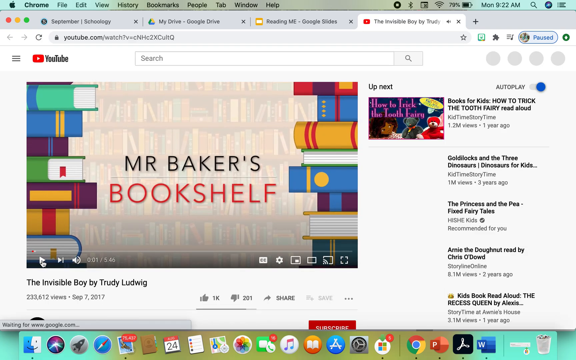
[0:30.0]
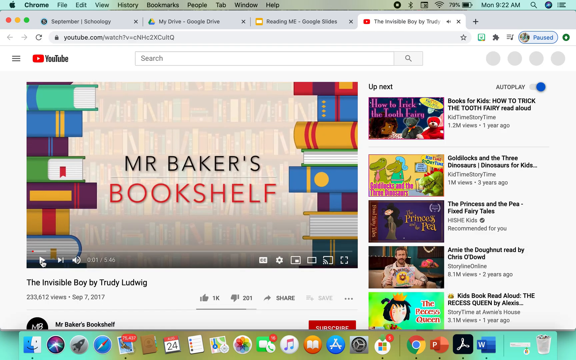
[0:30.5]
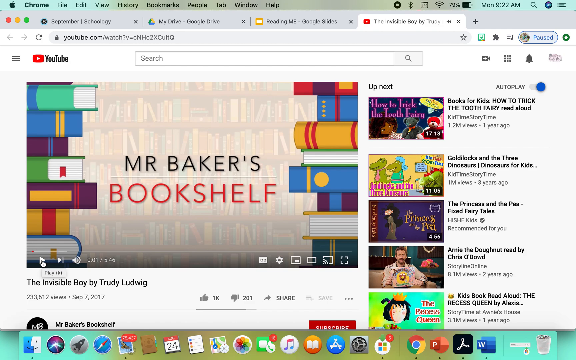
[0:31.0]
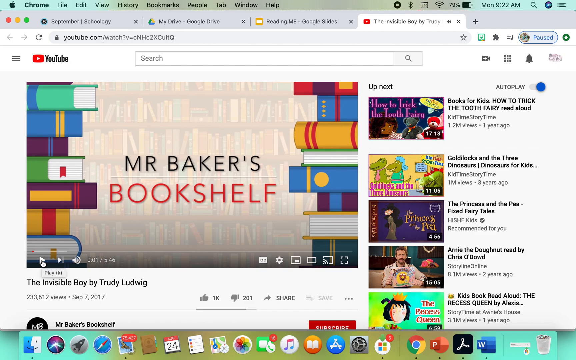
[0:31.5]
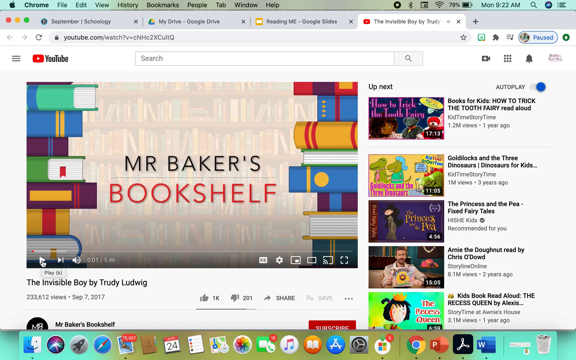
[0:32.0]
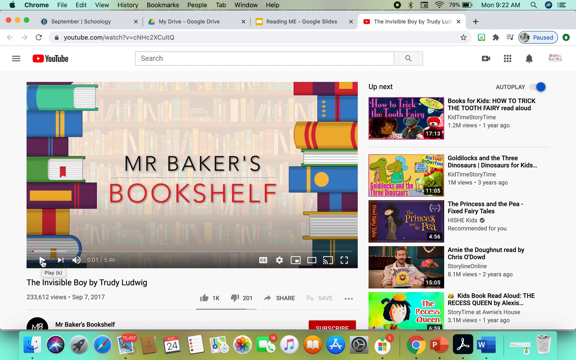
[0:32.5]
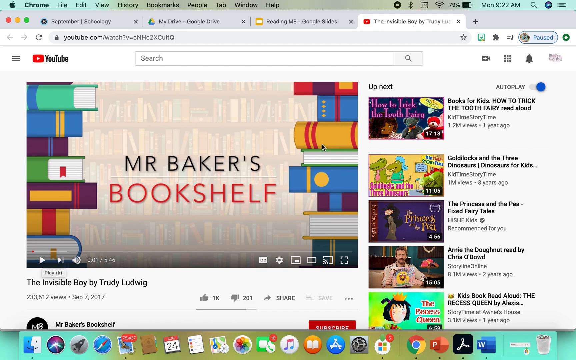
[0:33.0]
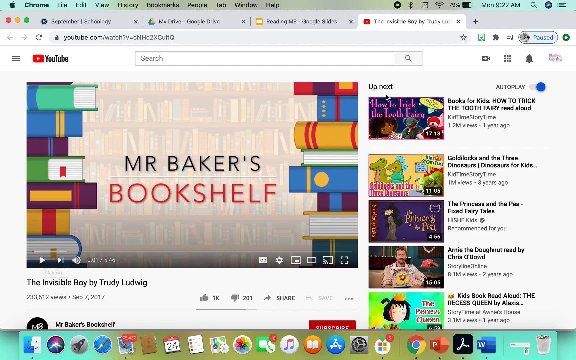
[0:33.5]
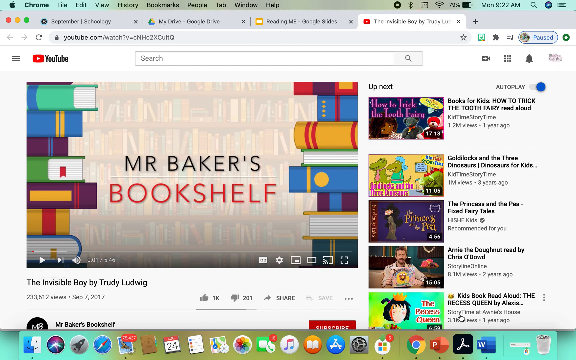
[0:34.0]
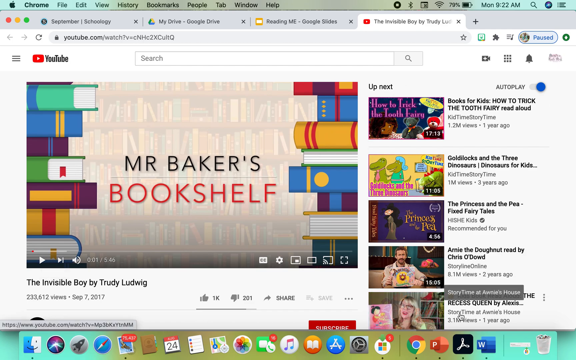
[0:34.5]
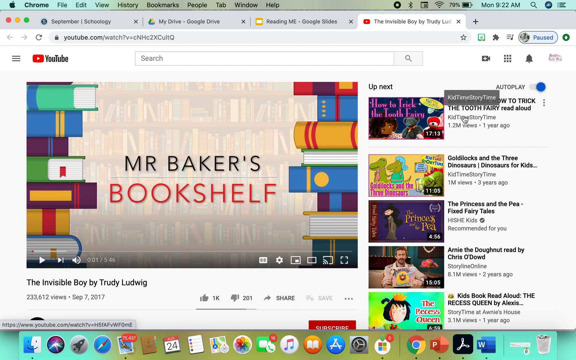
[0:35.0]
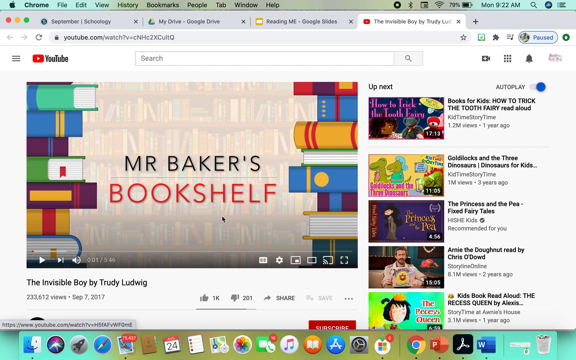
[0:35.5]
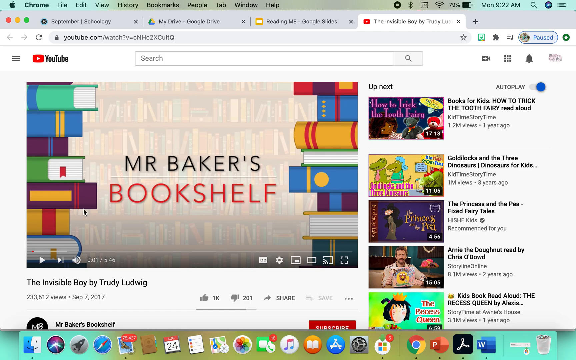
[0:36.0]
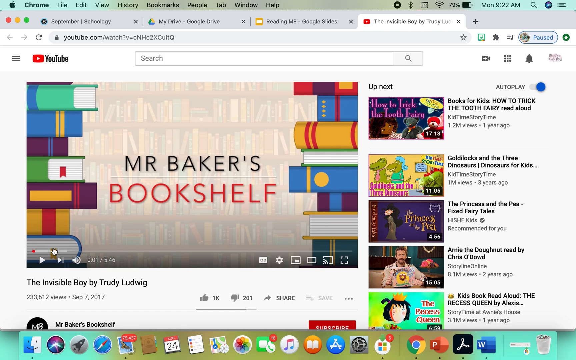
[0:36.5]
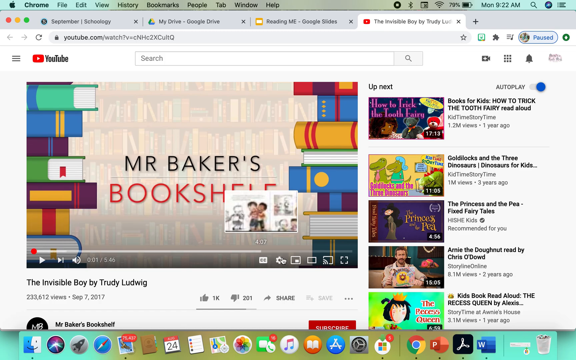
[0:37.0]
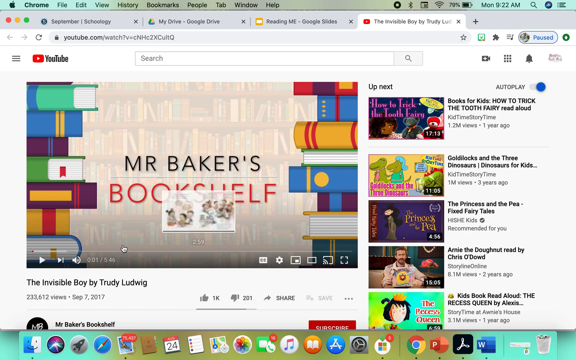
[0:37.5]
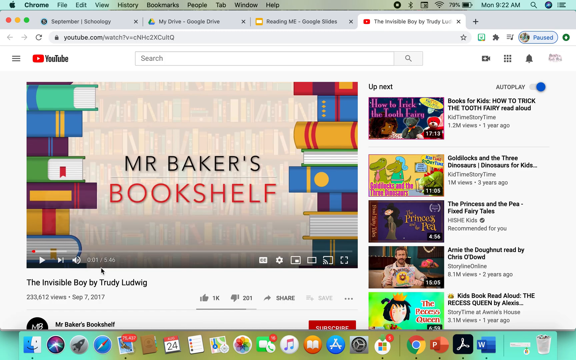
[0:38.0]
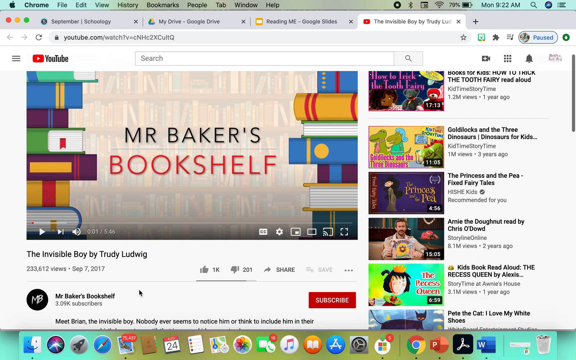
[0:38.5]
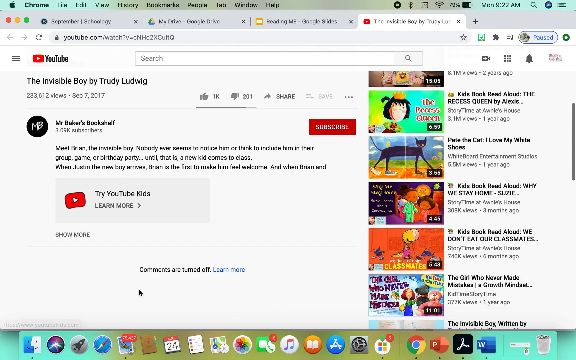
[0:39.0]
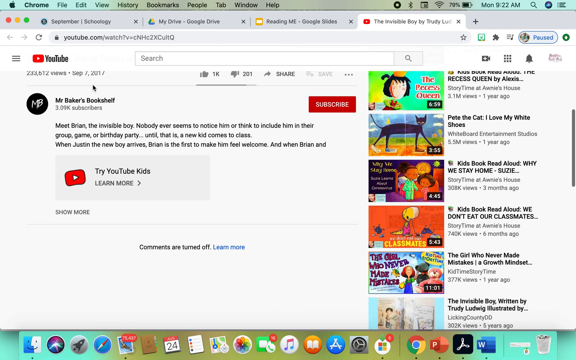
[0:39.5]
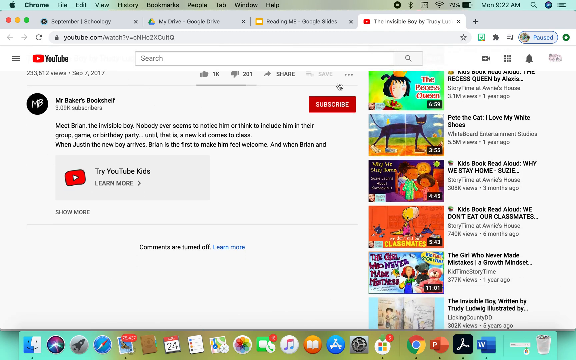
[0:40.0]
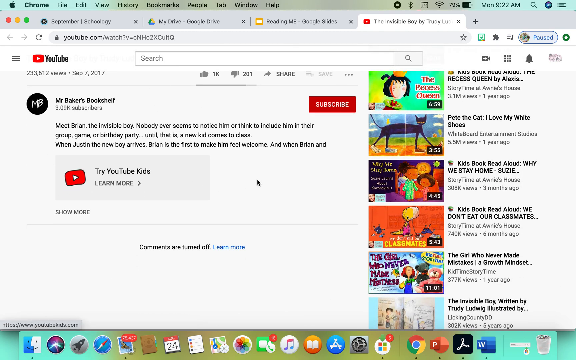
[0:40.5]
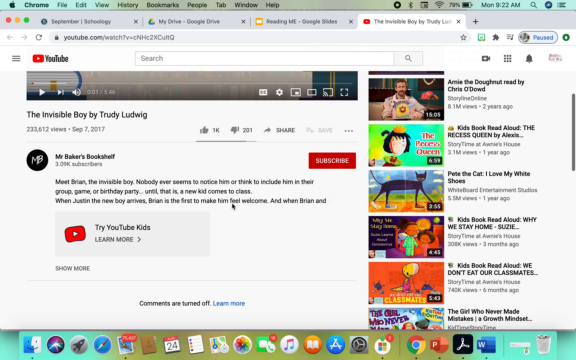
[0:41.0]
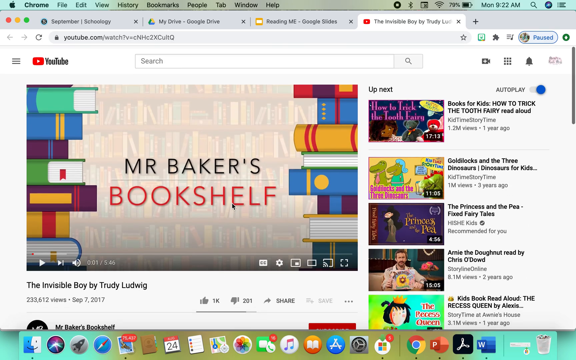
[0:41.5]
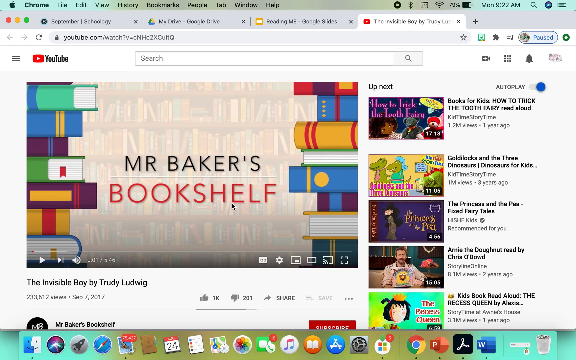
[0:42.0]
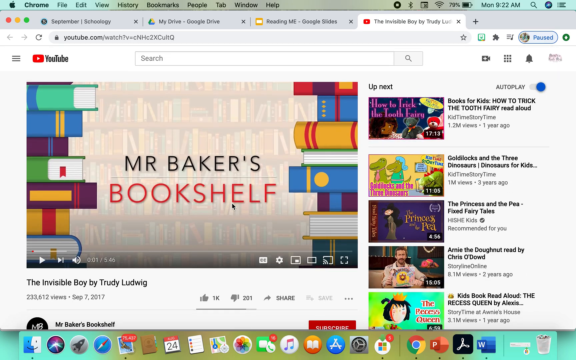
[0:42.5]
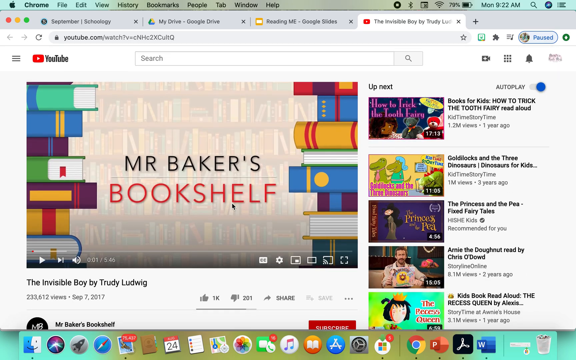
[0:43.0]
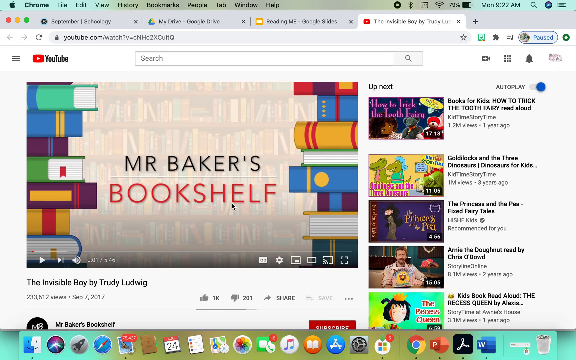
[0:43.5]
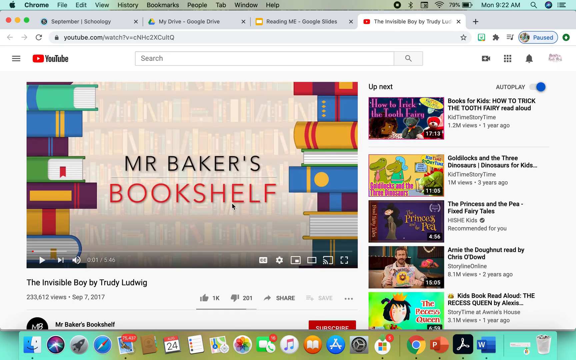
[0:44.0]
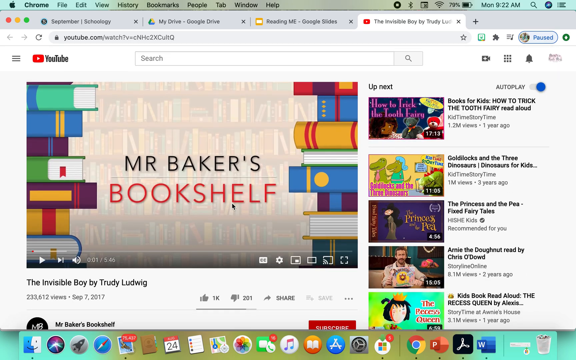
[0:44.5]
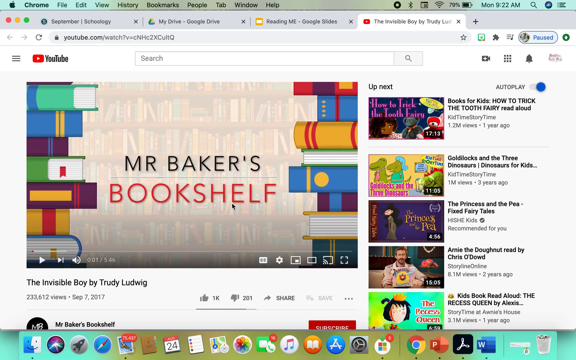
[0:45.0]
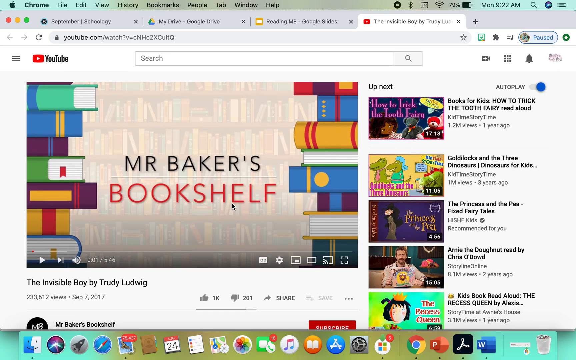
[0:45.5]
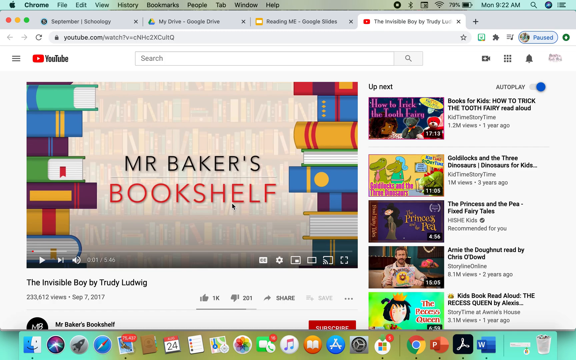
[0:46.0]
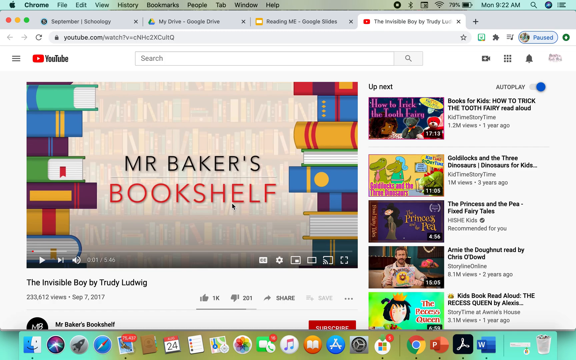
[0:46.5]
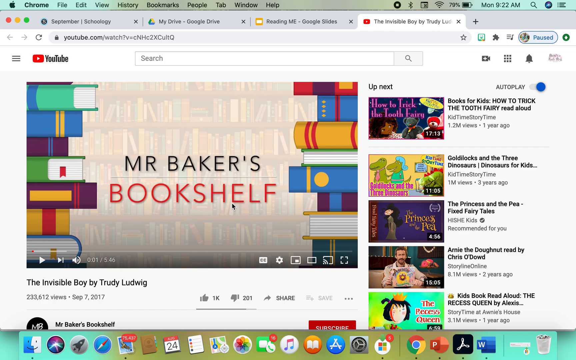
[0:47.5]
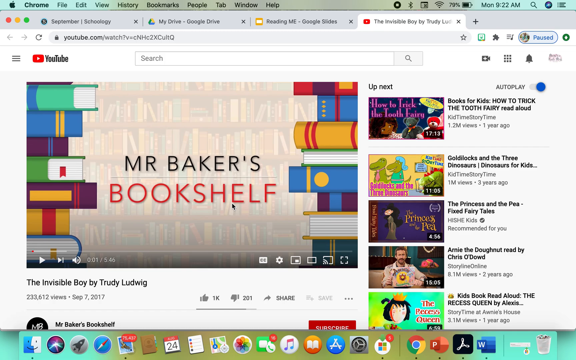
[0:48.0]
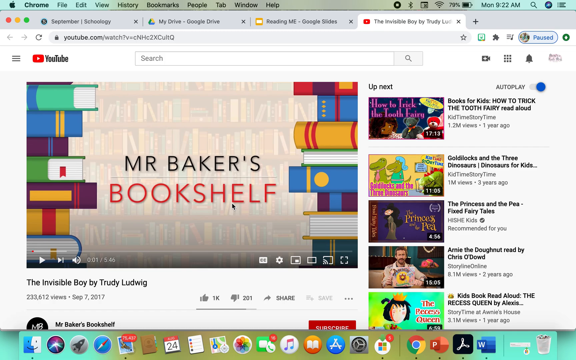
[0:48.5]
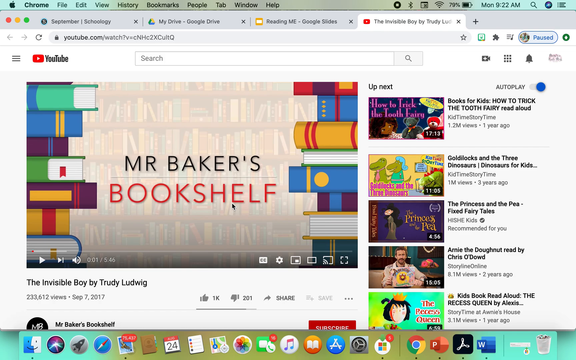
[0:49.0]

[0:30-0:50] The browser is now on YouTube, the fourth tab, showing a video from the YouTube channel Mr. Baker's Bookshelf titled "The Invisible Boy by Trudie Ludwig." The video is on its opening credits, which show clip art of a stack of books on the left and right sides with the title "Mr. Baker's Bookshelf" in between. The user hovers over the video list on the right, which has autoplay on and consists of children's books such as Goldilocks and The Princess and the Pea. They then hover over the main video, especially the playback section, scroll down, and make a circular motion with the cursor over the Mr. Baker's Bookshelf description. They scroll back up until the top half of the YouTube video is visible.